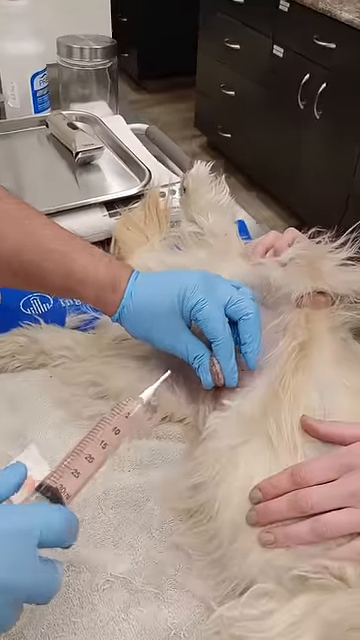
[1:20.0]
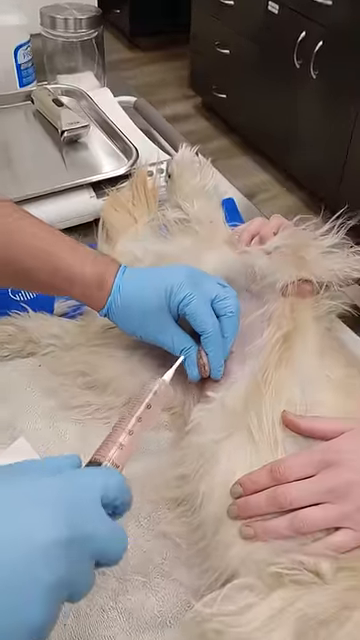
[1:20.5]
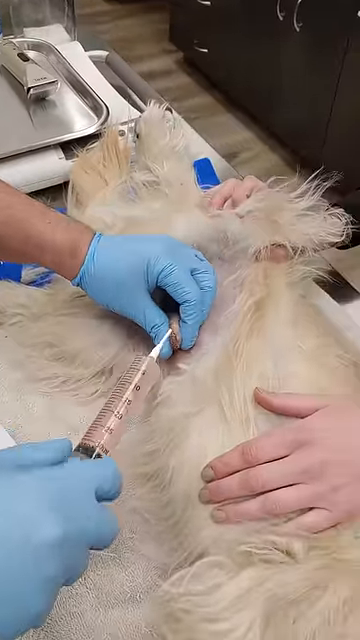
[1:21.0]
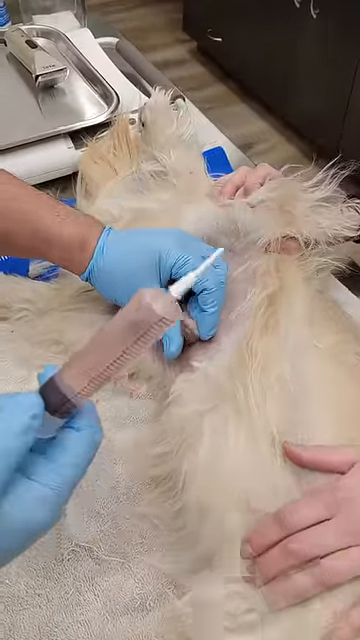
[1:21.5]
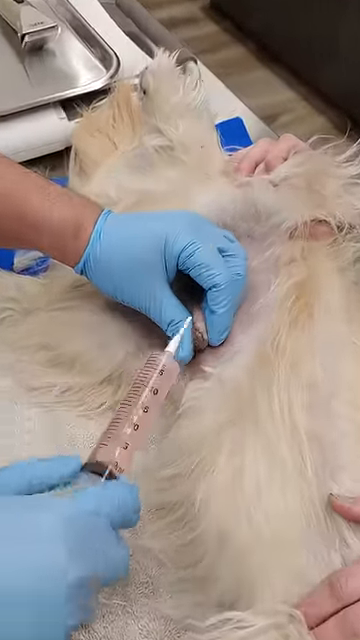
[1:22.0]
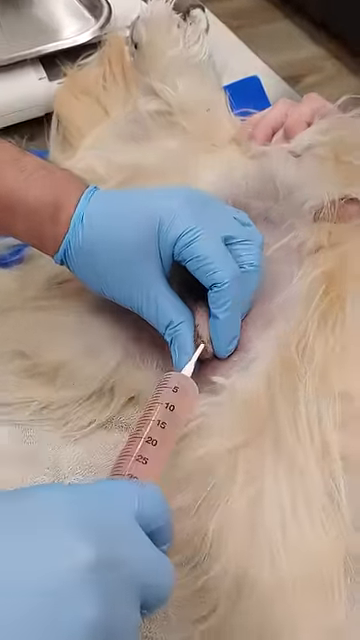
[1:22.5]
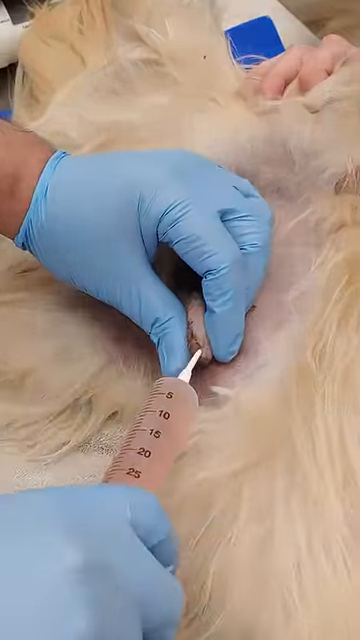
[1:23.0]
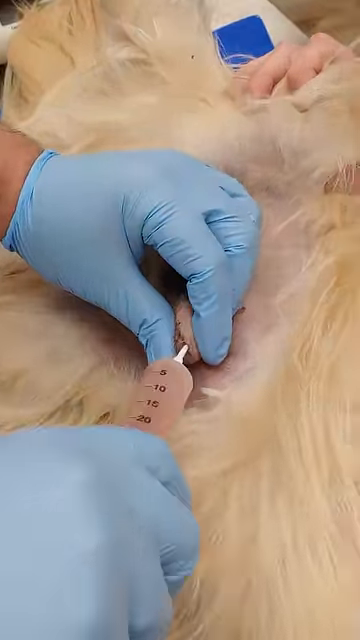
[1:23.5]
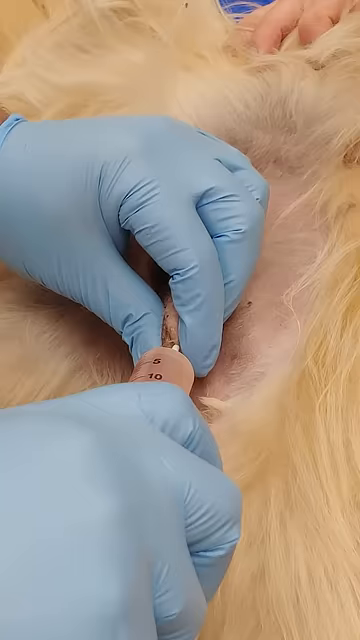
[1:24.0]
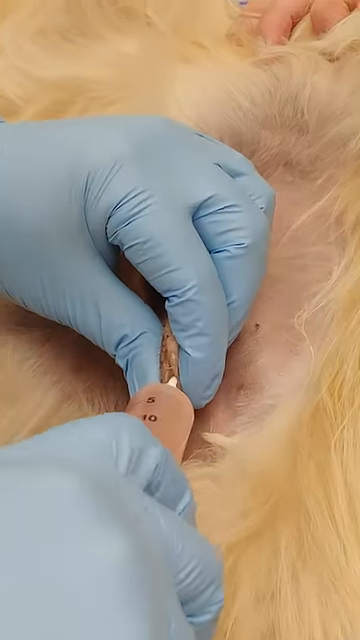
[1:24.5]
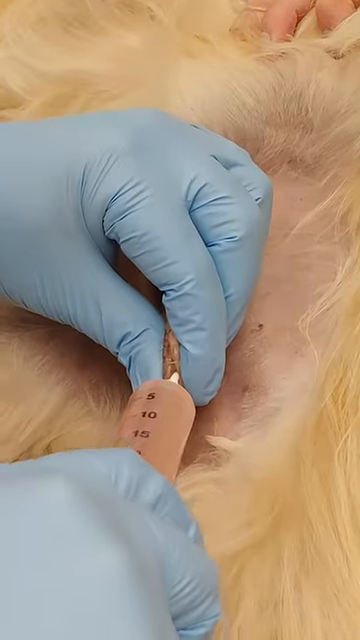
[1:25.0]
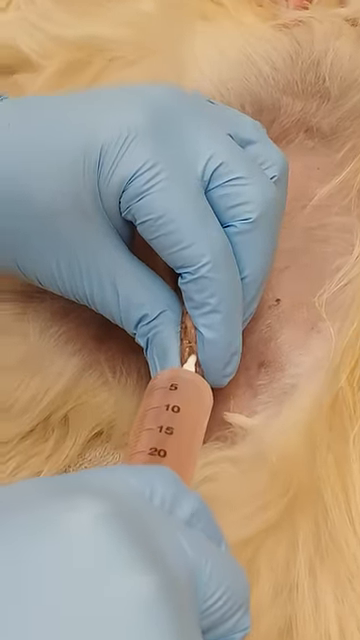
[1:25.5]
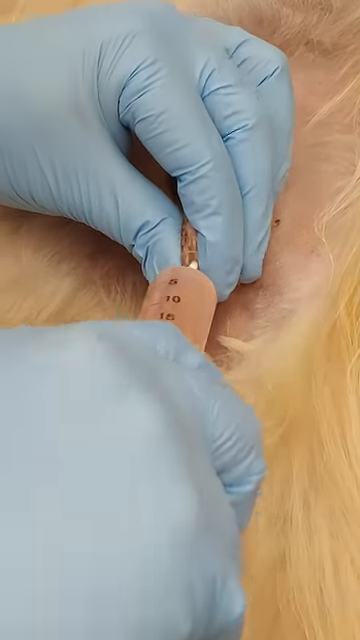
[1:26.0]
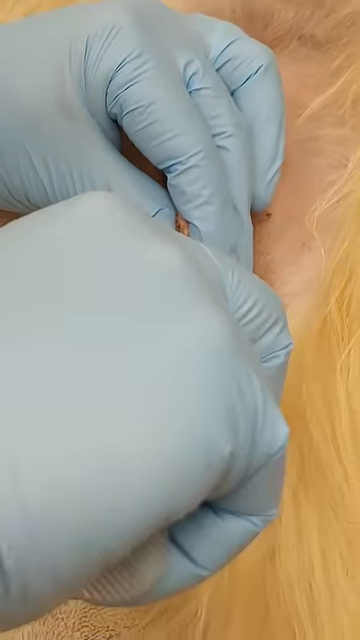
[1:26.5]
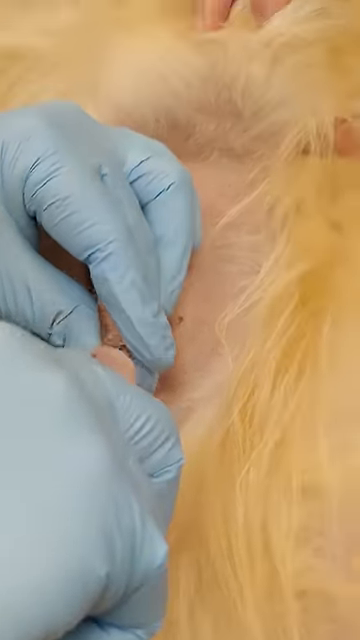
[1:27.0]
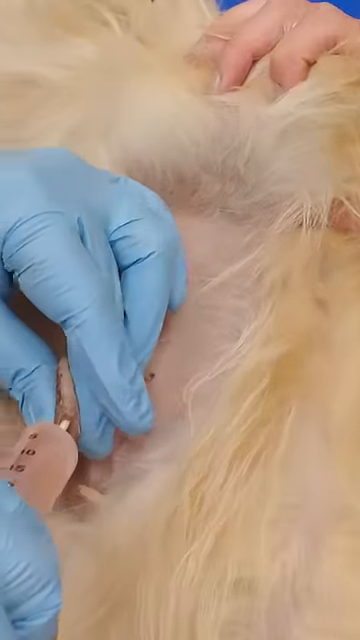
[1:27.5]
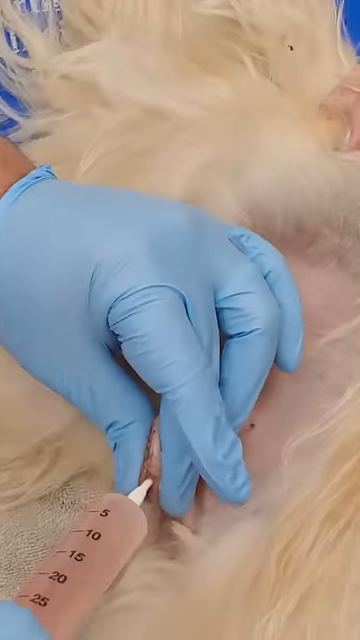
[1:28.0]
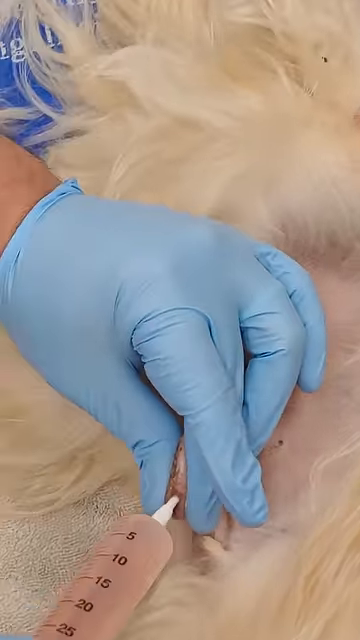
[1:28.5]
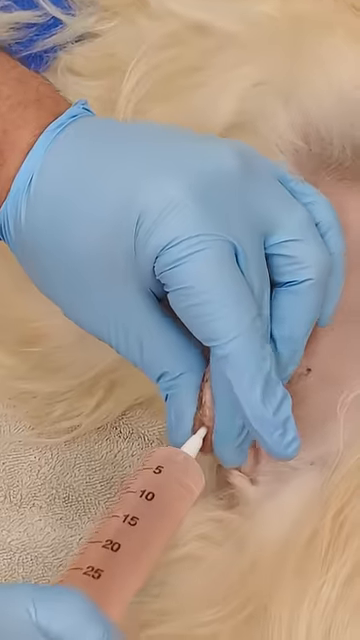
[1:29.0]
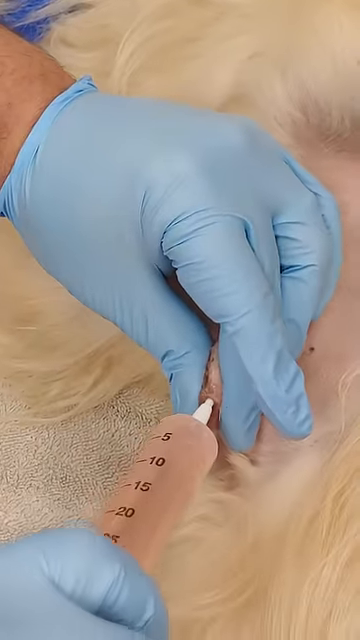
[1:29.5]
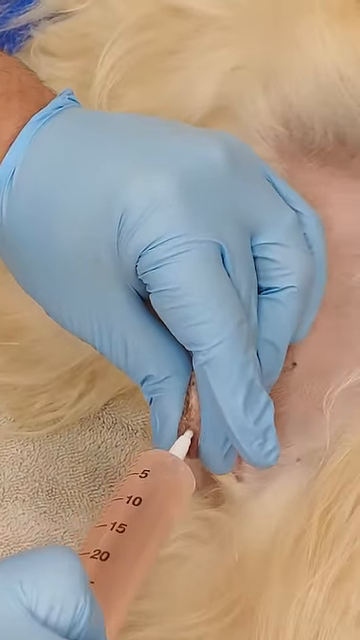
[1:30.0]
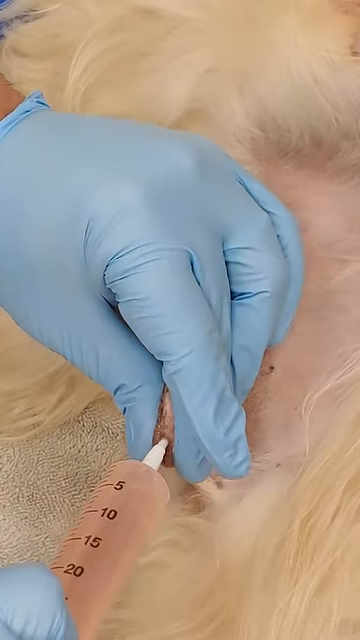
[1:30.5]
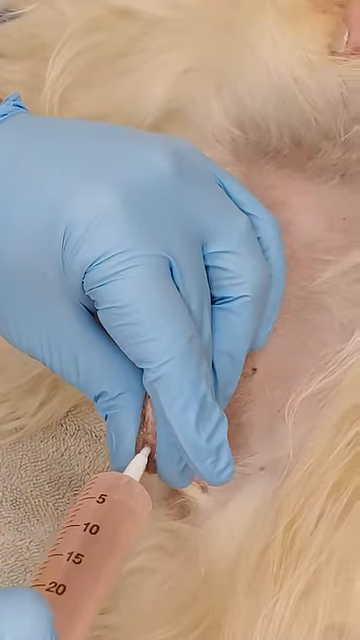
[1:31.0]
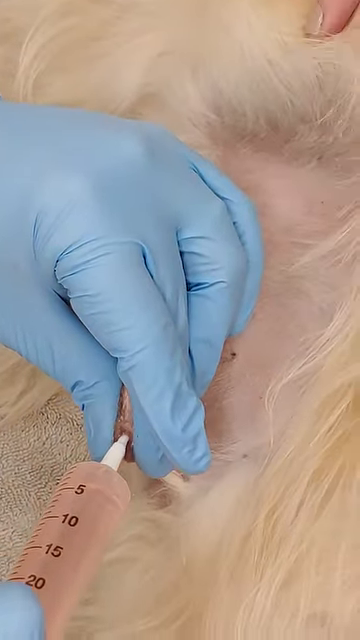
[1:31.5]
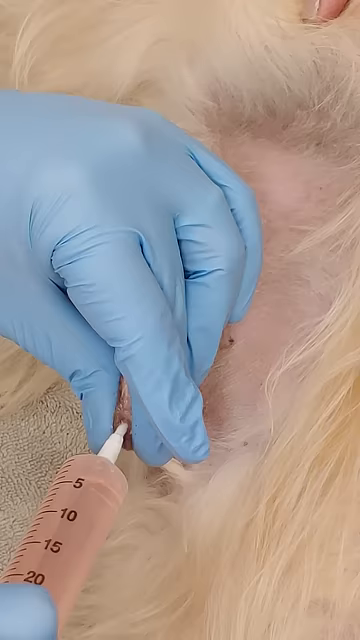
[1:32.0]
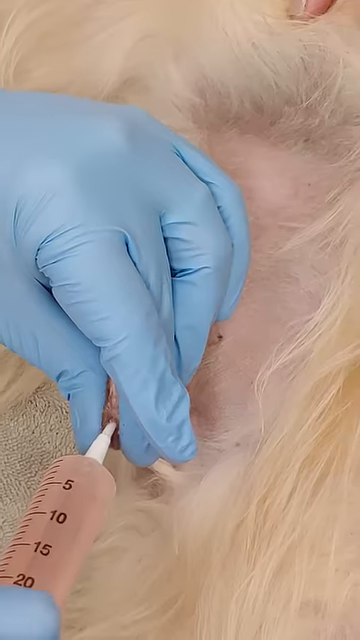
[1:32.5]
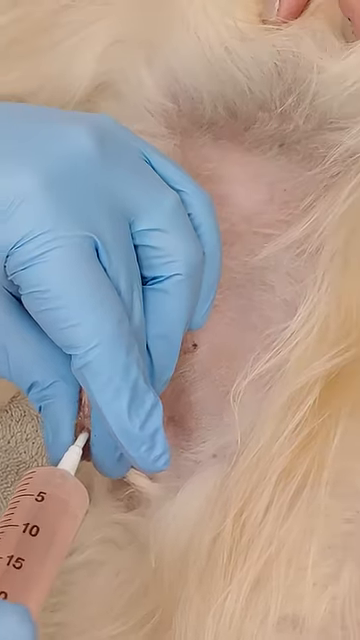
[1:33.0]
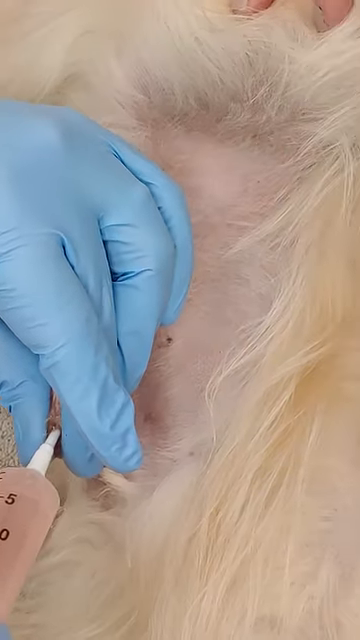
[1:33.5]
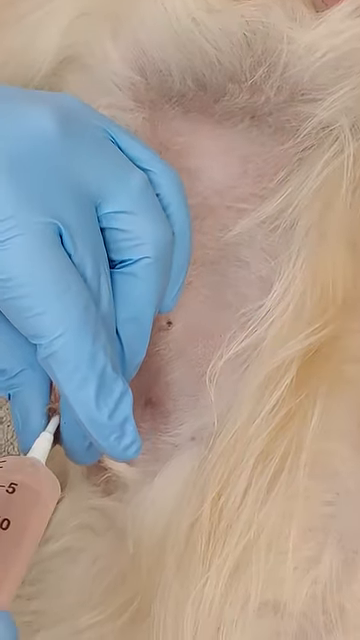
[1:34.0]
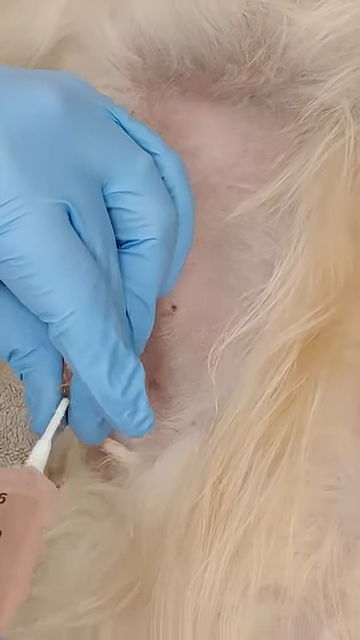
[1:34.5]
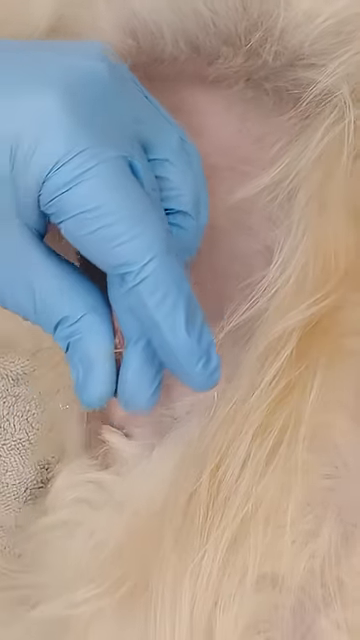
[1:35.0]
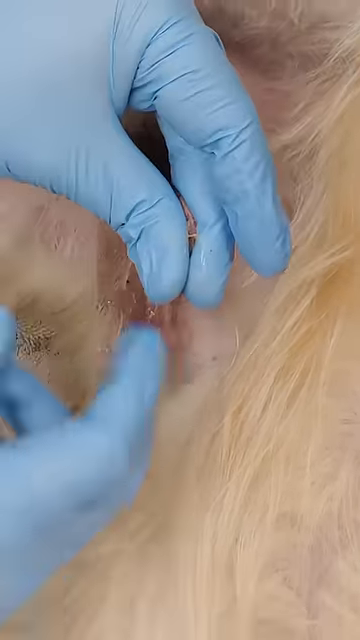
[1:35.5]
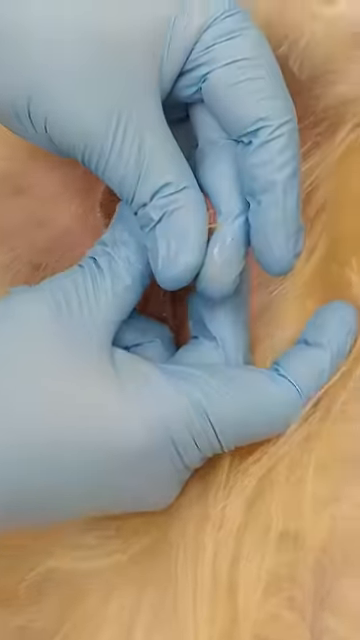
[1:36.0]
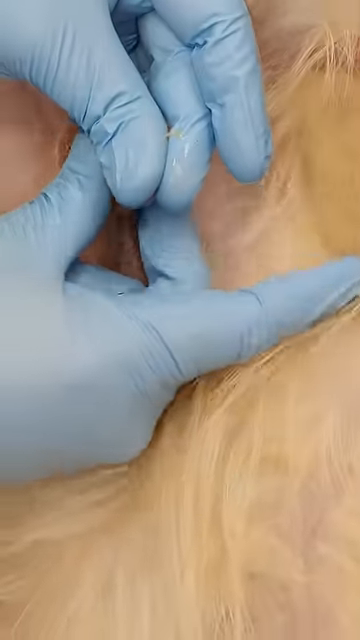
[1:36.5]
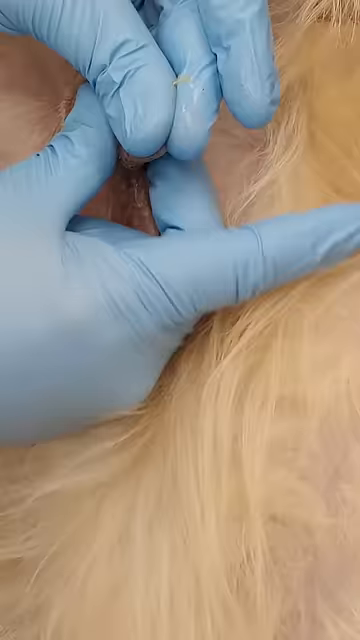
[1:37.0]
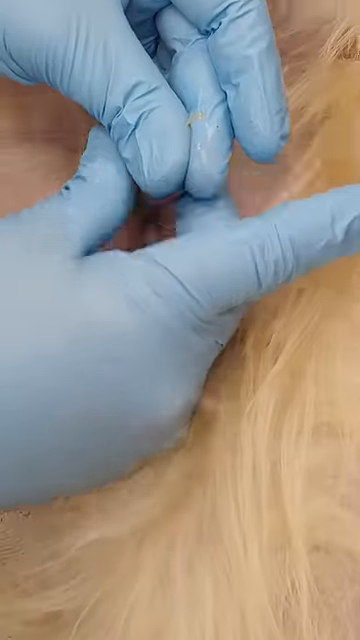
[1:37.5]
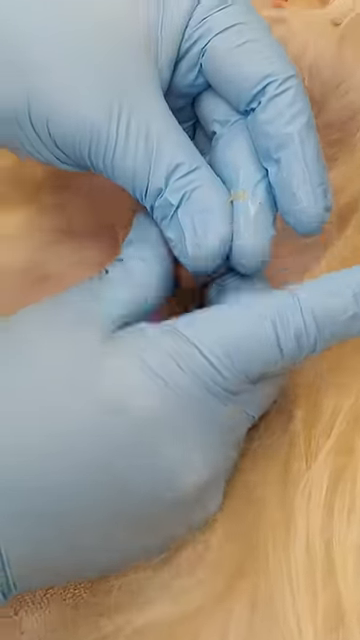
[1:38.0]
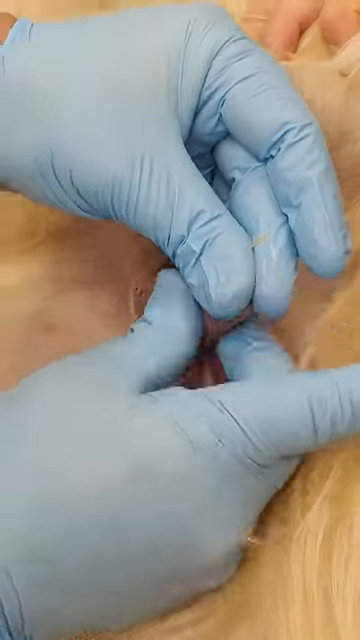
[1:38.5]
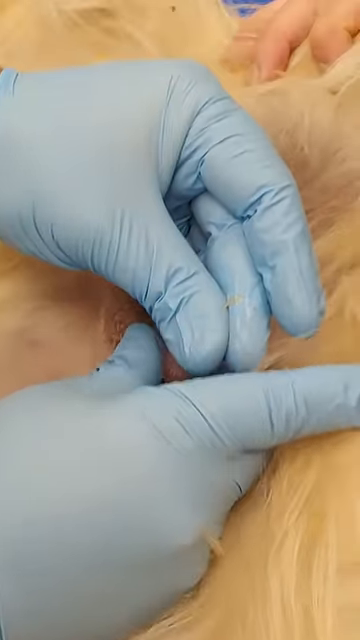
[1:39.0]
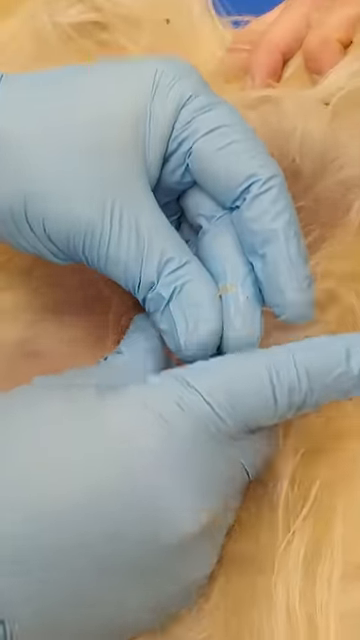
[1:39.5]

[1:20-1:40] The shot is zoomed in on the anesthetized dog's penis area before a surgery. The vet pinches the tip of the penis so that it kind of opens a little, and it looks like he is going to put a catheter inside. An assistant on the right is brushing back something. He pinches the area and squeezes the liquid inside, then kind of pushes it along so the liquid moves down the urethra.